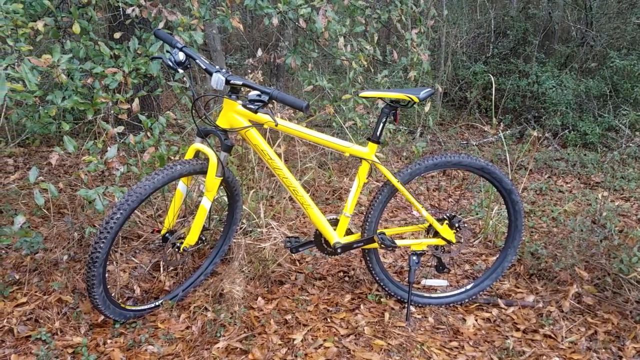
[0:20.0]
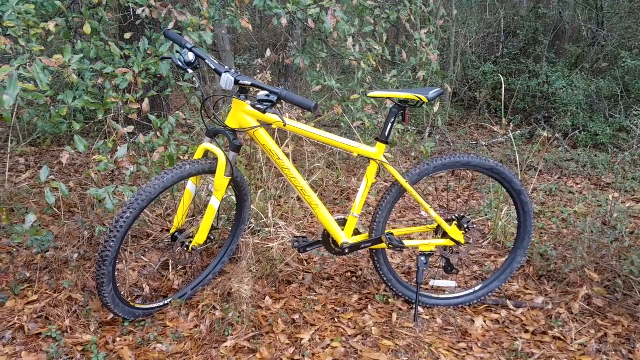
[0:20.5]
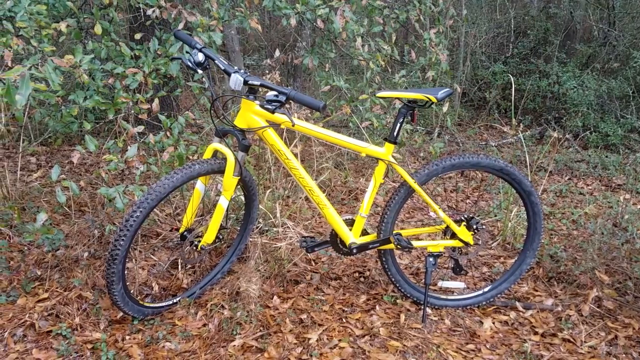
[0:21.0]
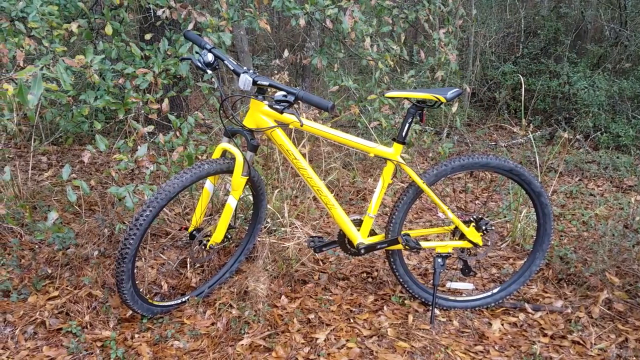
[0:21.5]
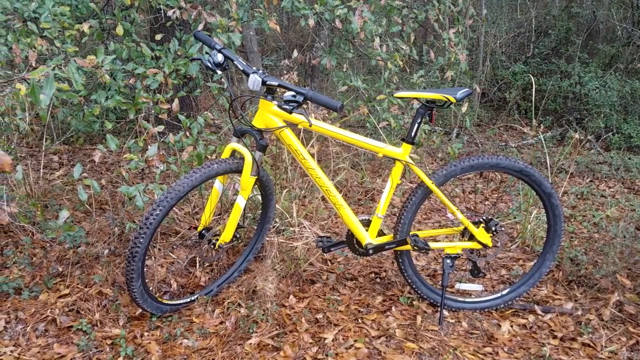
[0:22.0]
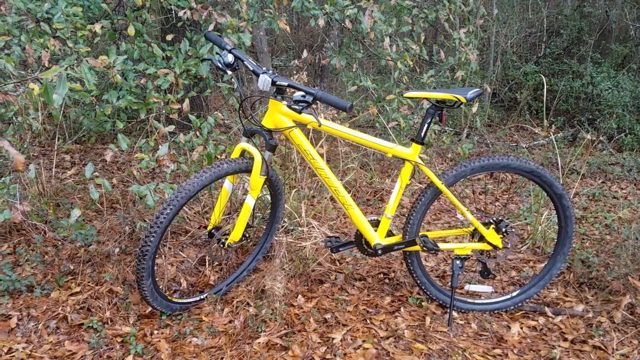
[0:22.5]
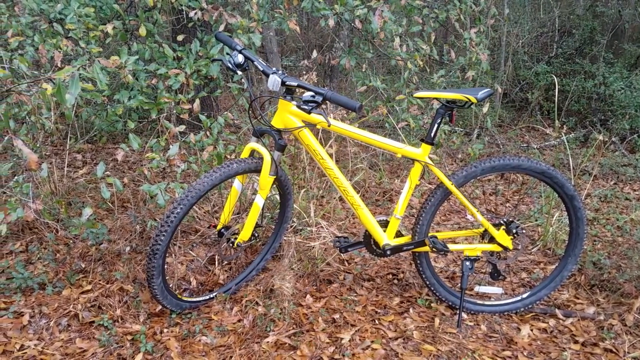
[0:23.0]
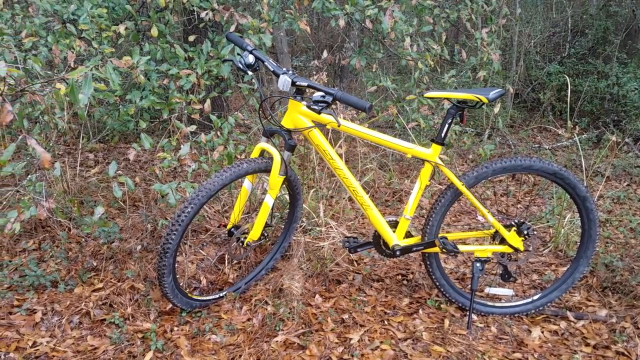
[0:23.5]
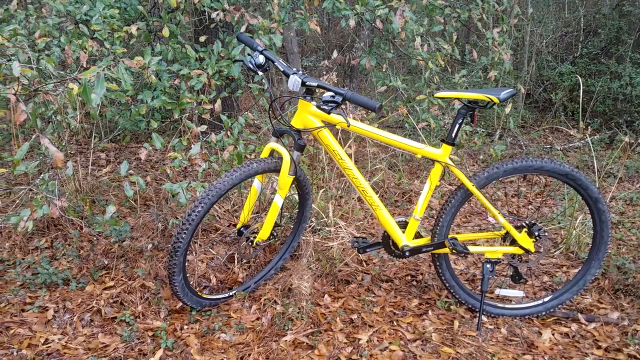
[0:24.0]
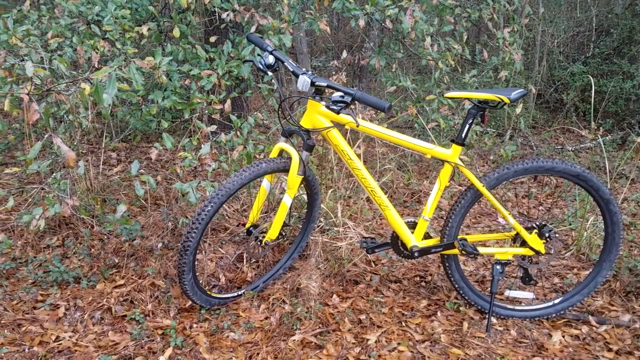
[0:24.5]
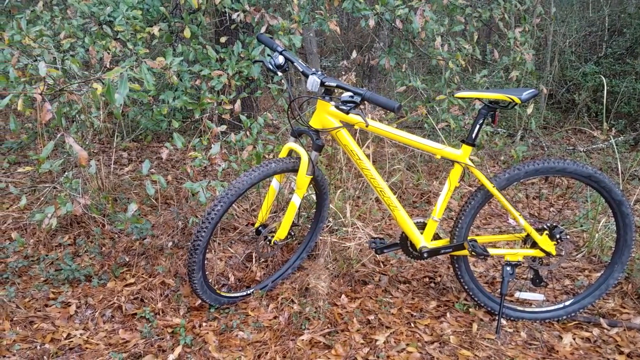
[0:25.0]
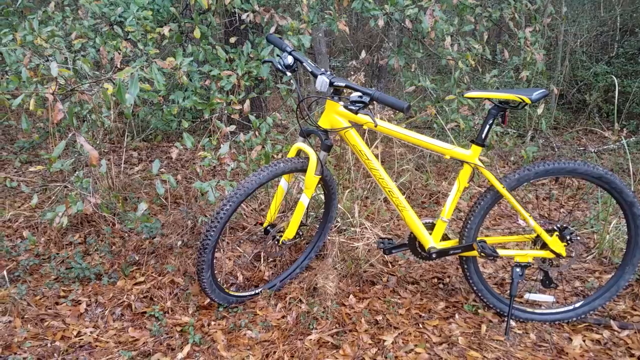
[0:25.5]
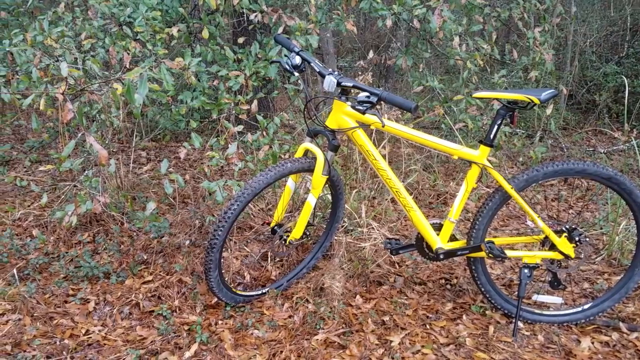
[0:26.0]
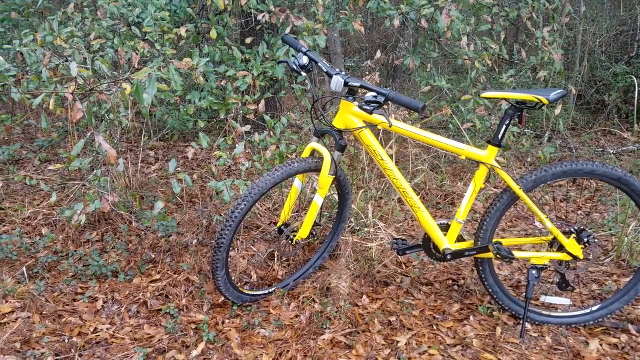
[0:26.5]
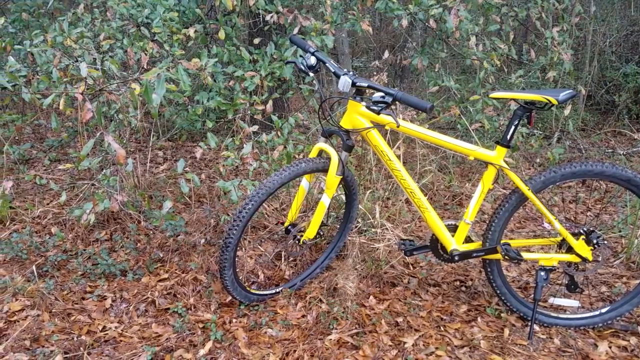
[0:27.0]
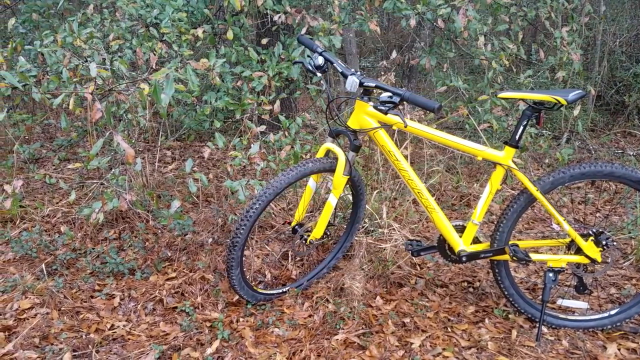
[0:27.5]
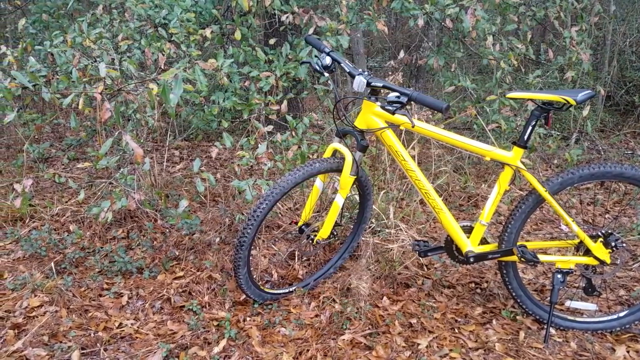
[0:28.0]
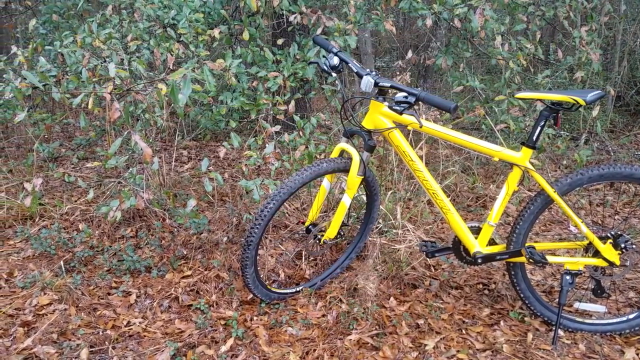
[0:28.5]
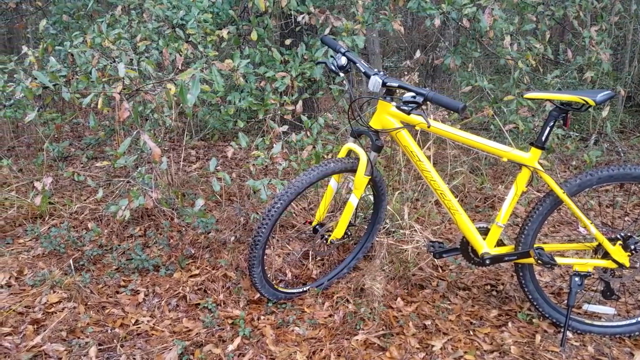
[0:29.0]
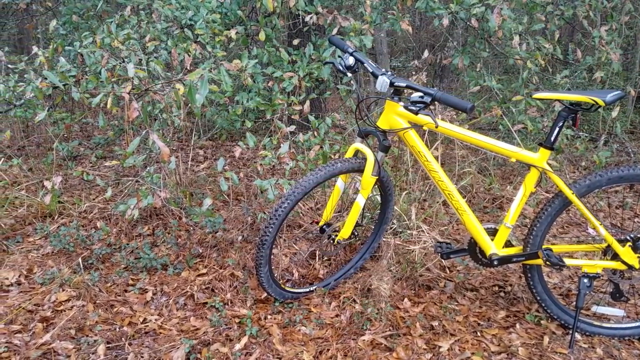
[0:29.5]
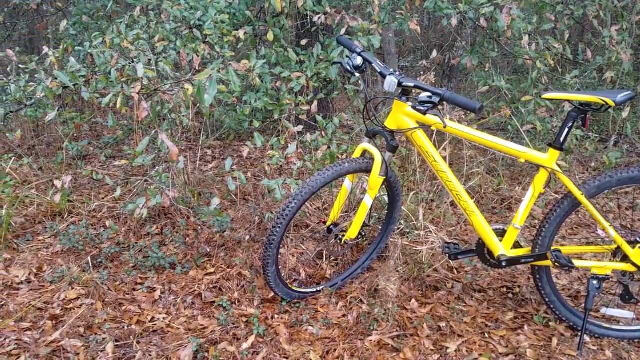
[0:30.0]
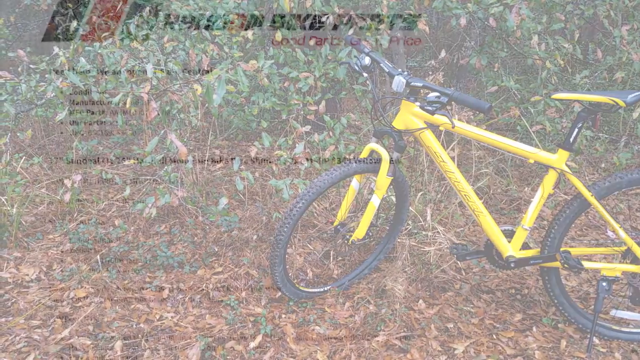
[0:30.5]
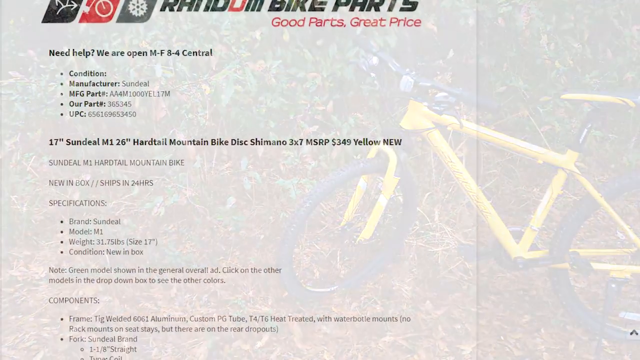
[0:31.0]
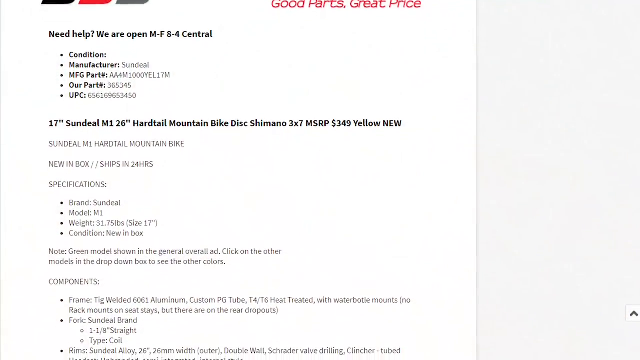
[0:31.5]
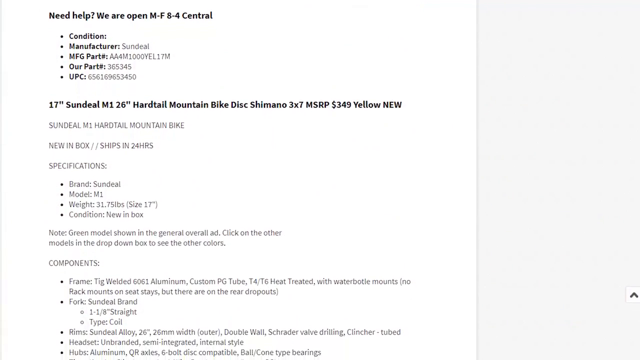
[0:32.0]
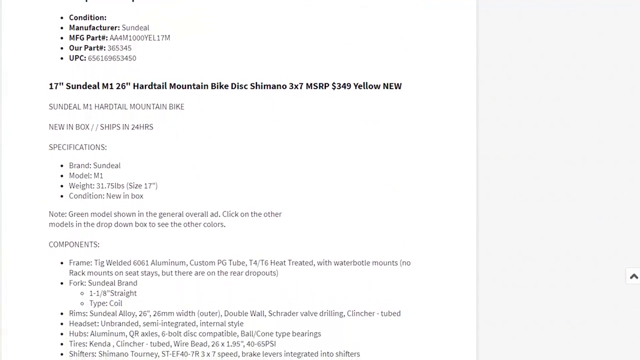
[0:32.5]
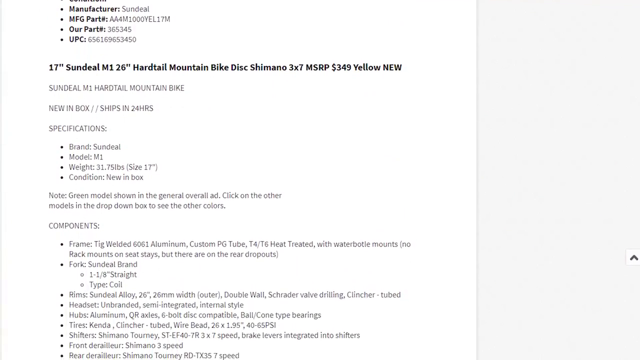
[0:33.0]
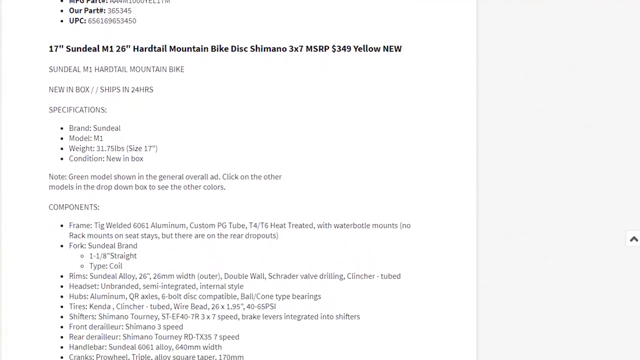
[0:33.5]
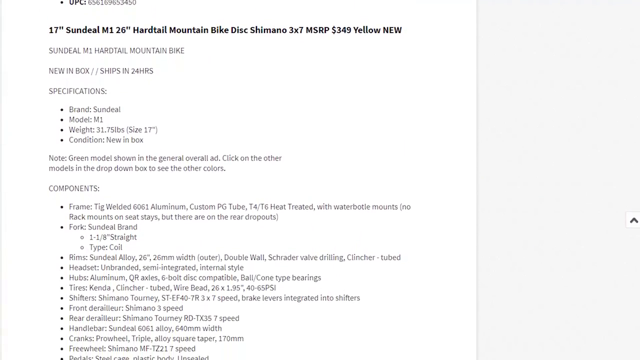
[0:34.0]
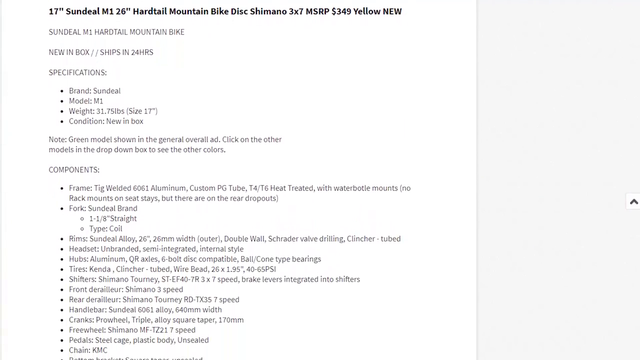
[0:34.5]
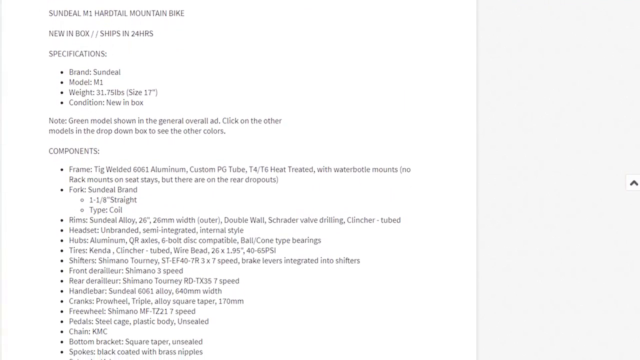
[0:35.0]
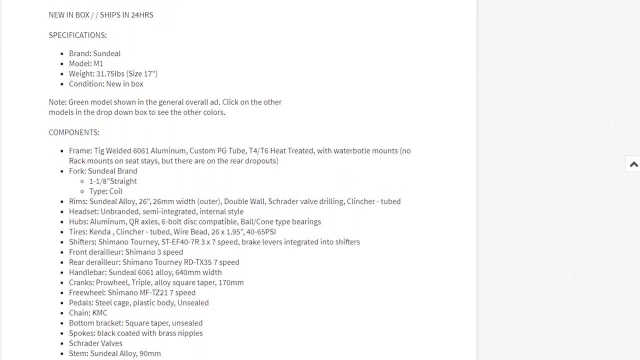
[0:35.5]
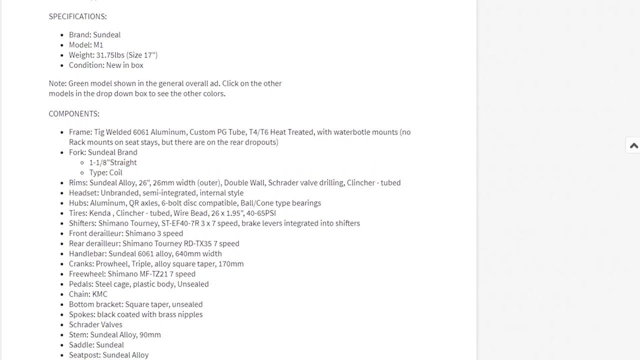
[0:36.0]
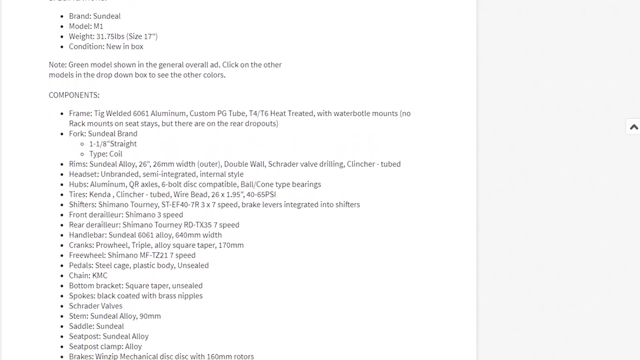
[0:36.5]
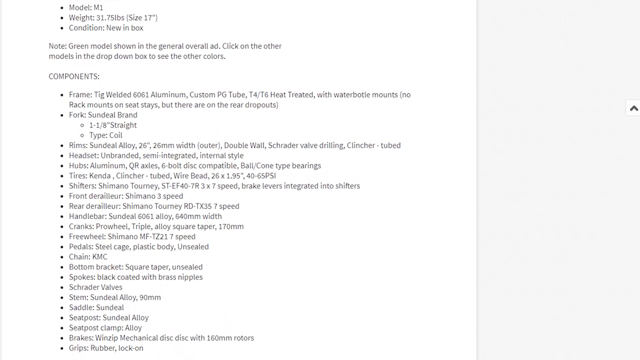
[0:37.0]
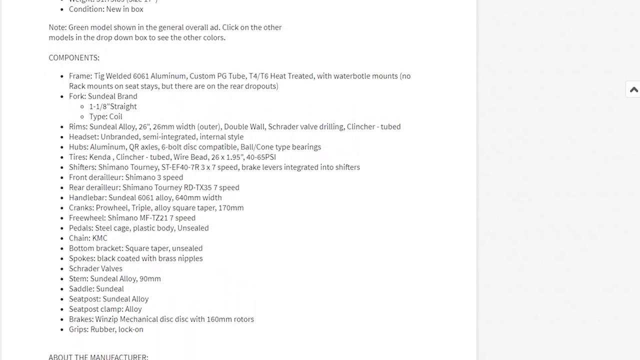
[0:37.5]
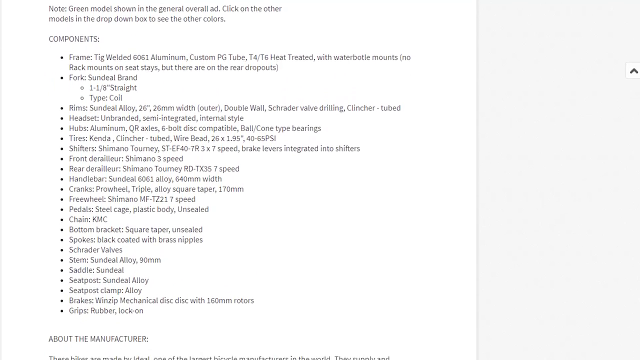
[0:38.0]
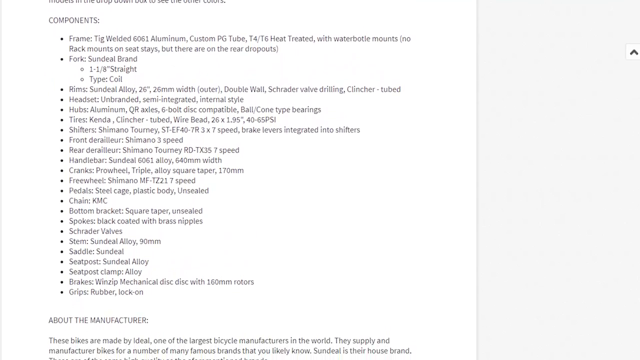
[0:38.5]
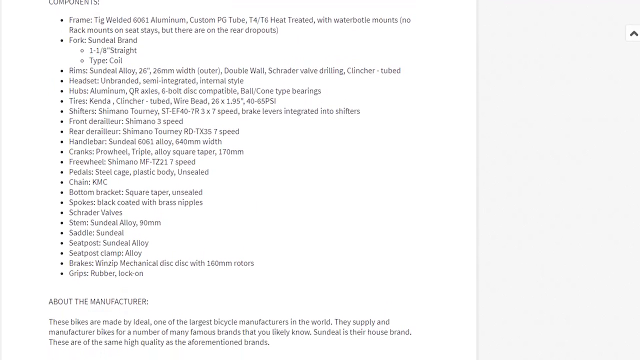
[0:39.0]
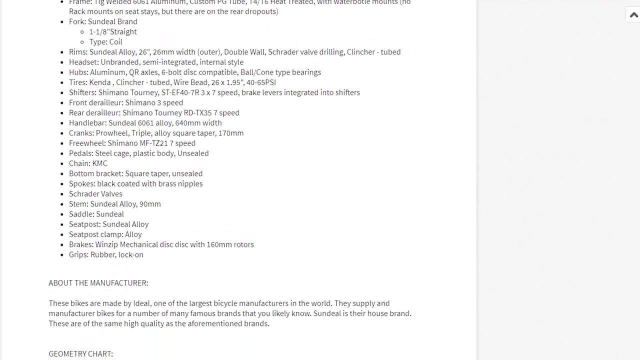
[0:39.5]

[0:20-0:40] A yellow bike, taken out of a box from Amazon, has had its wheels put on. It is filmed in the woods, with the camera panning out and moving to the left, and the bike has a kickstand. Next comes a piece of paper covered in small writing with statistics about the bike. It says "Sundeal hardtail mountain bike new in box ships in 24 hours specifications brand Sundeal model m1 weight 31.75 pounds condition new in box note green model shown in the general overall ad click on other models in the drop down box to see the other components or colors," followed by a list of frame and component specs.